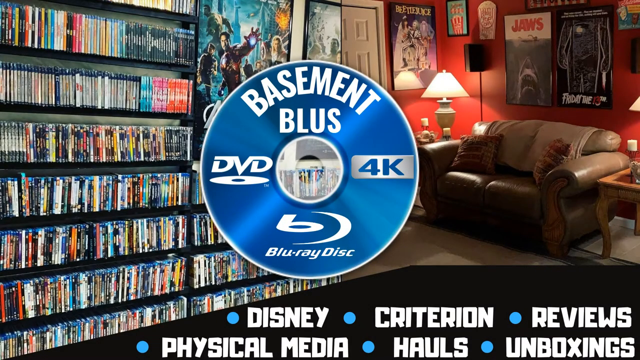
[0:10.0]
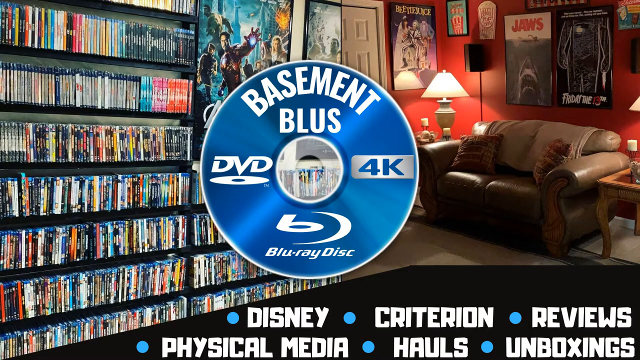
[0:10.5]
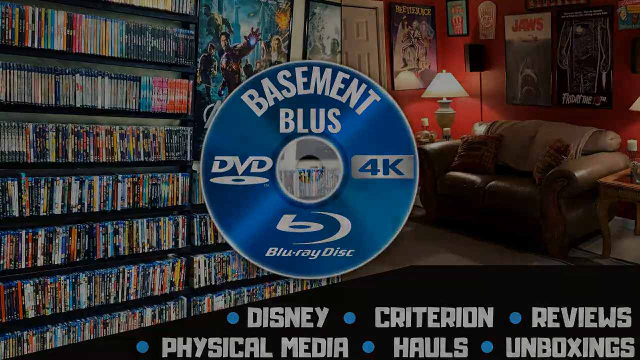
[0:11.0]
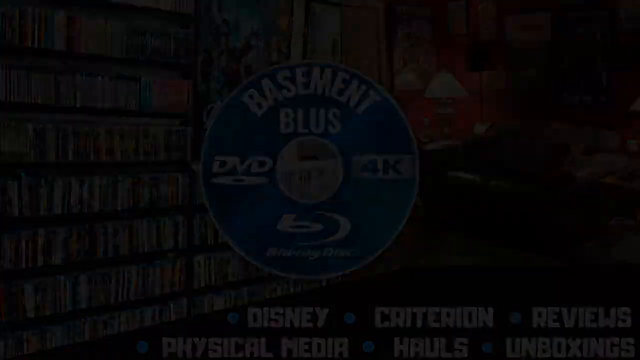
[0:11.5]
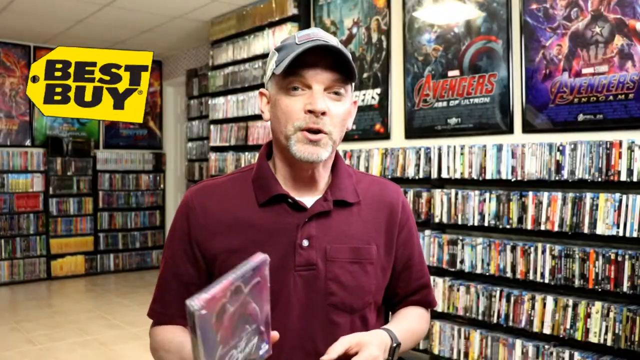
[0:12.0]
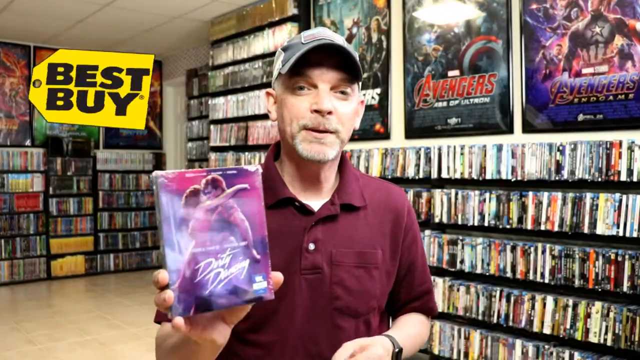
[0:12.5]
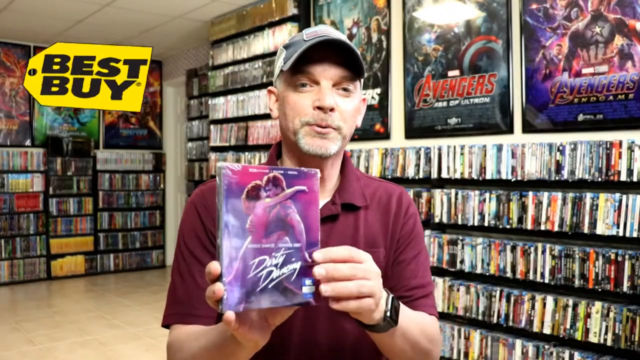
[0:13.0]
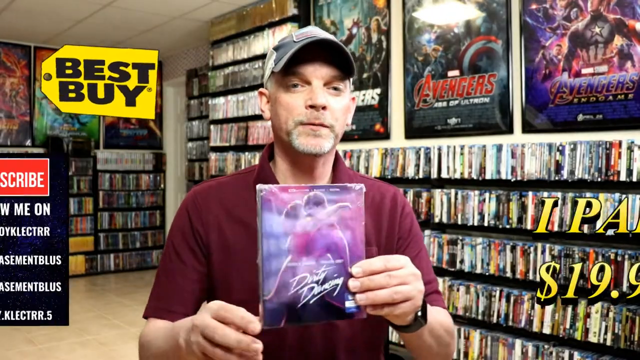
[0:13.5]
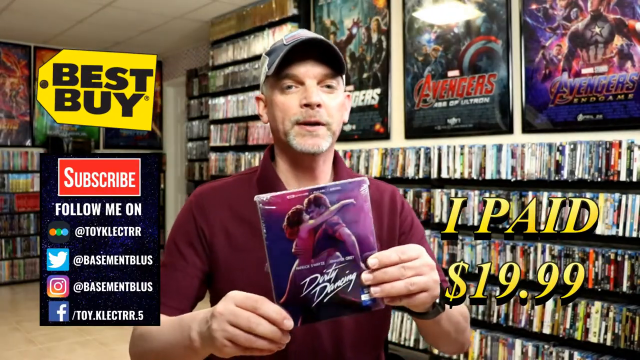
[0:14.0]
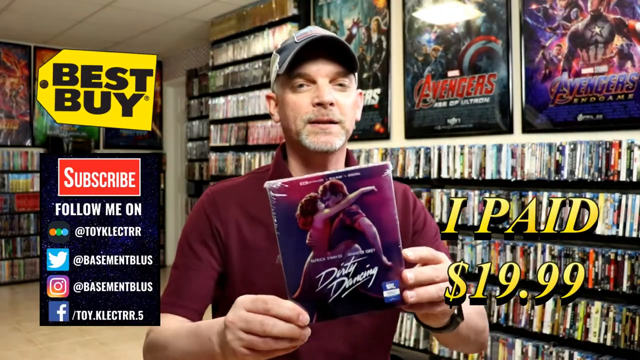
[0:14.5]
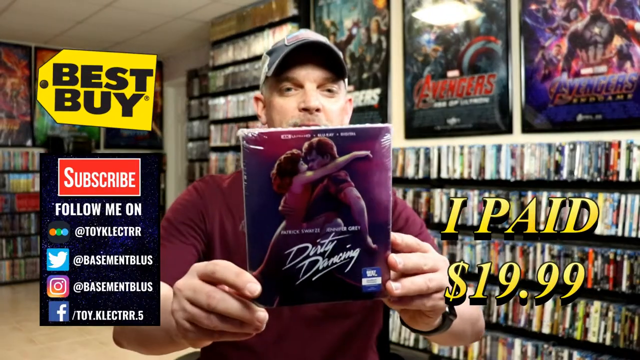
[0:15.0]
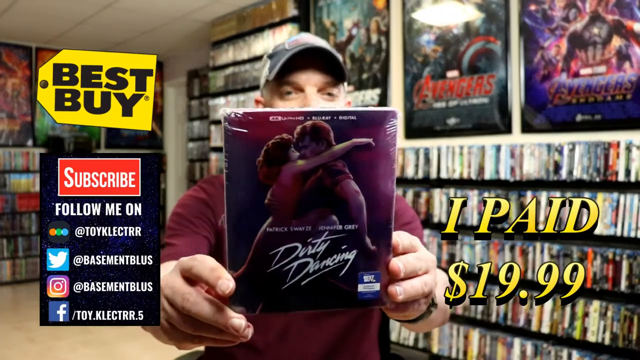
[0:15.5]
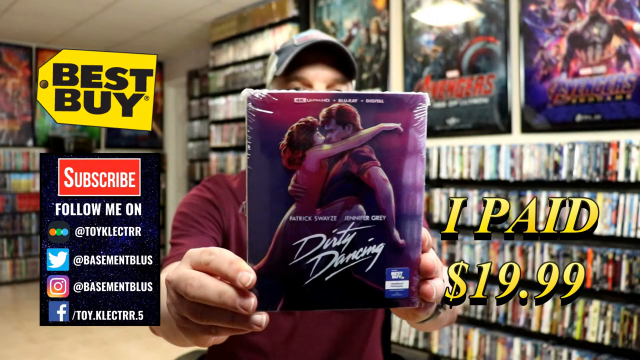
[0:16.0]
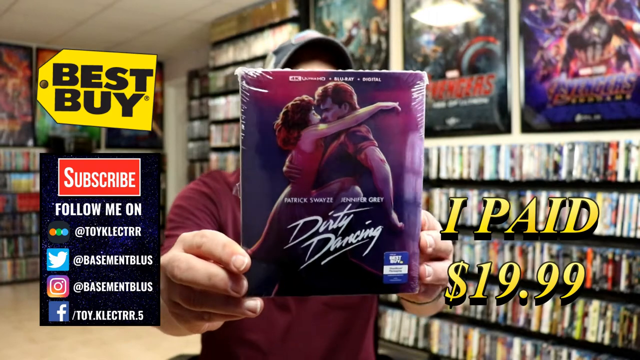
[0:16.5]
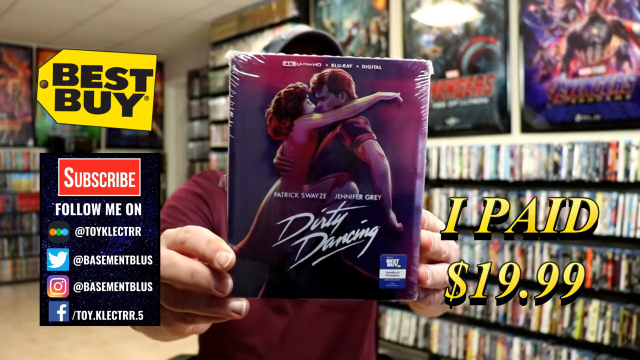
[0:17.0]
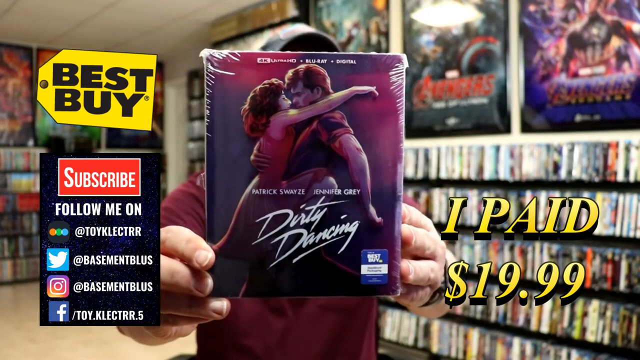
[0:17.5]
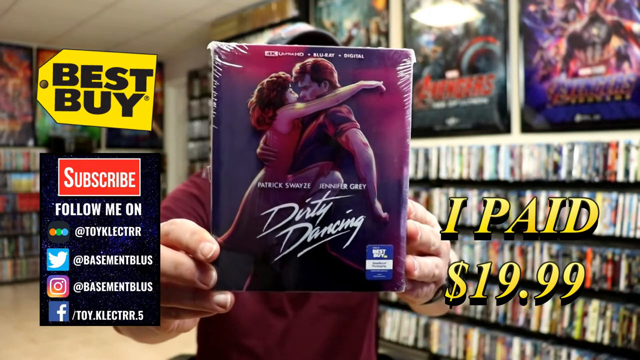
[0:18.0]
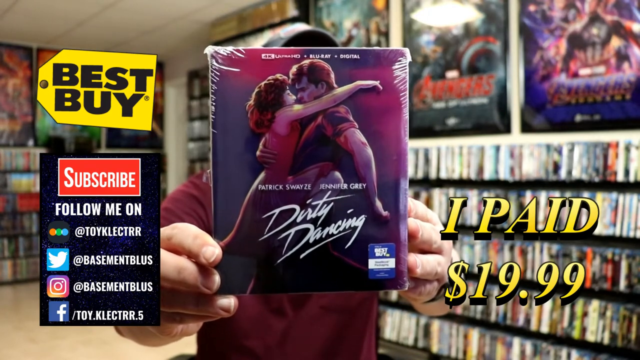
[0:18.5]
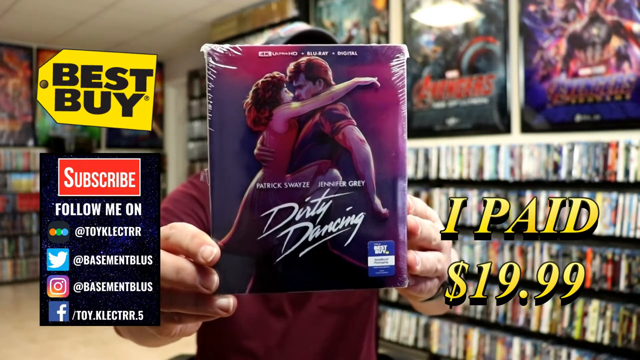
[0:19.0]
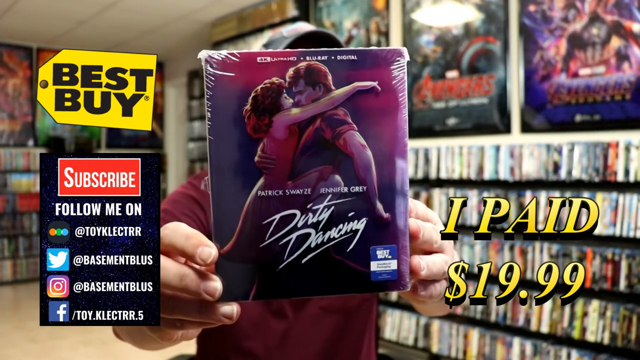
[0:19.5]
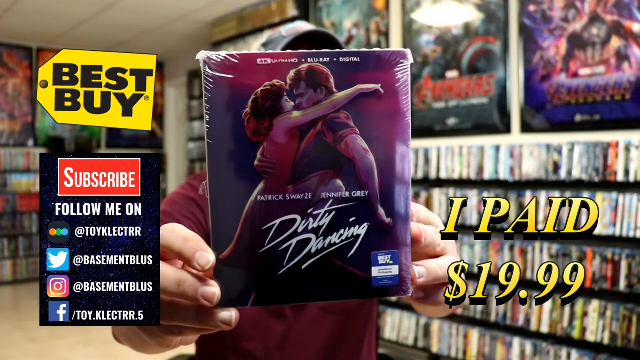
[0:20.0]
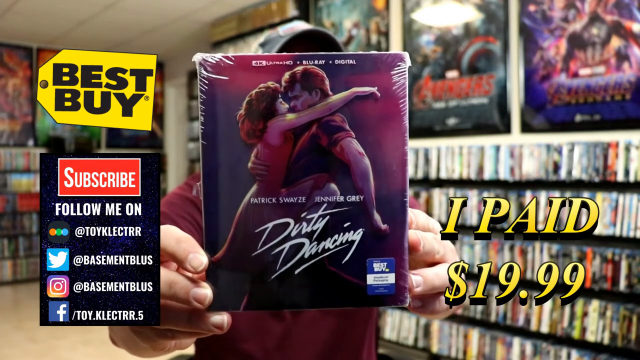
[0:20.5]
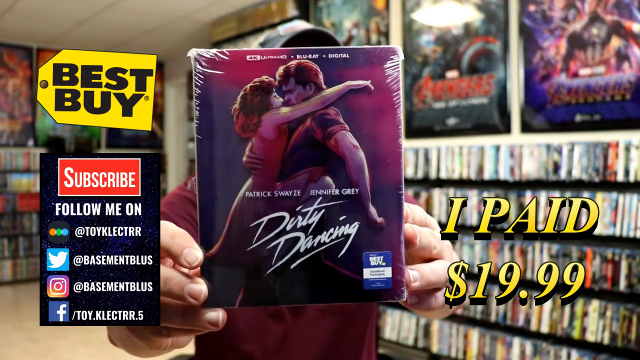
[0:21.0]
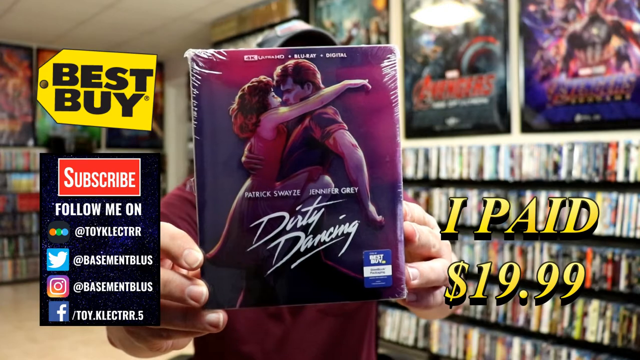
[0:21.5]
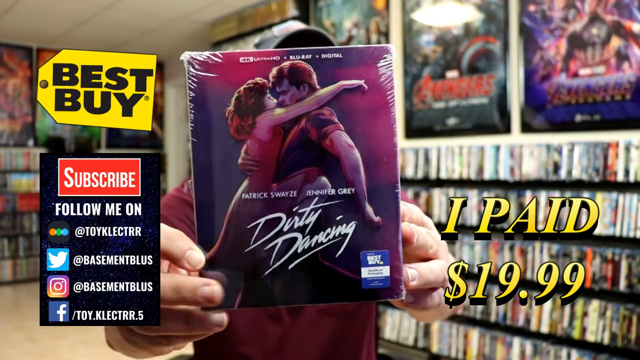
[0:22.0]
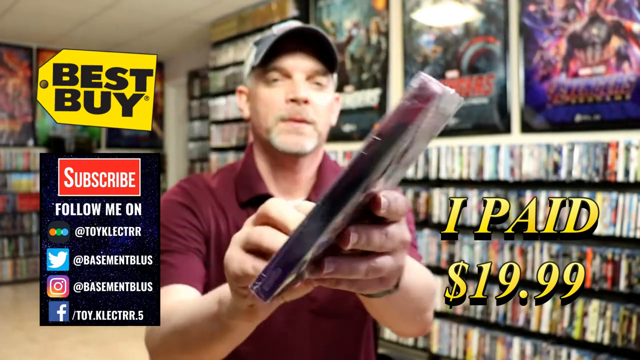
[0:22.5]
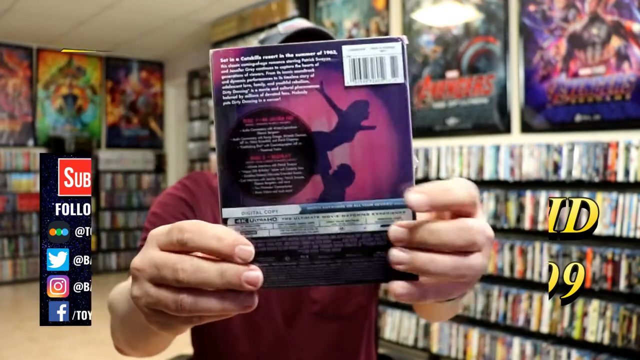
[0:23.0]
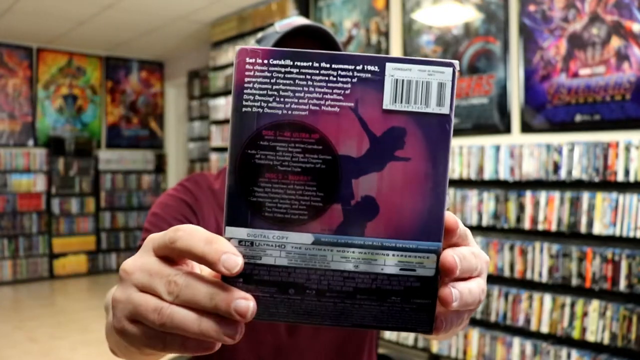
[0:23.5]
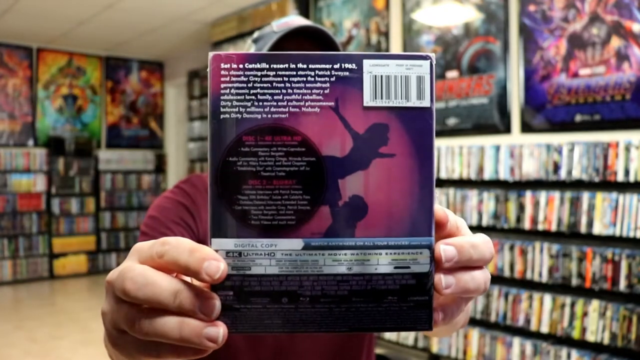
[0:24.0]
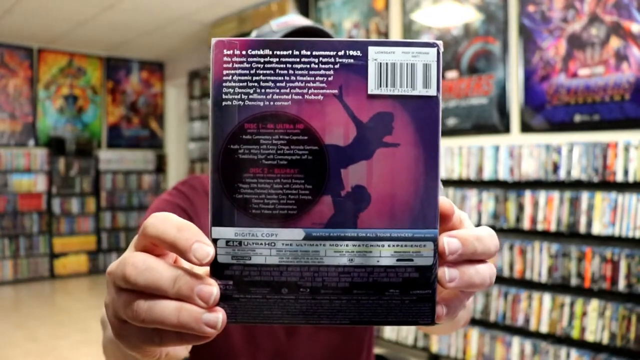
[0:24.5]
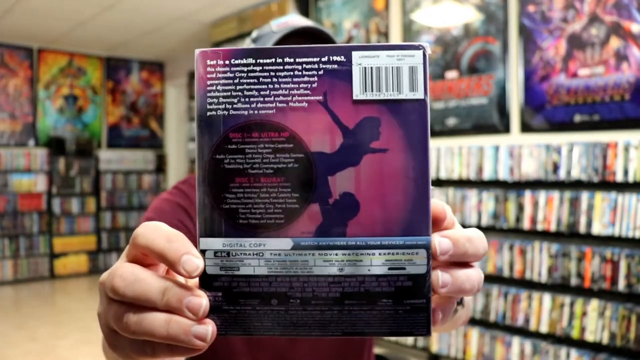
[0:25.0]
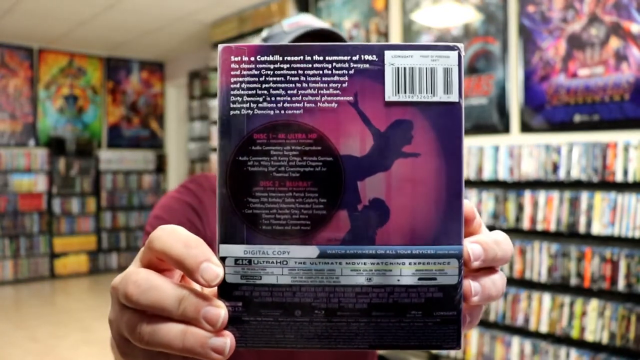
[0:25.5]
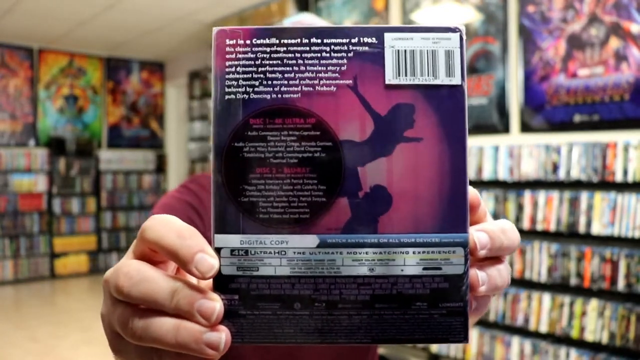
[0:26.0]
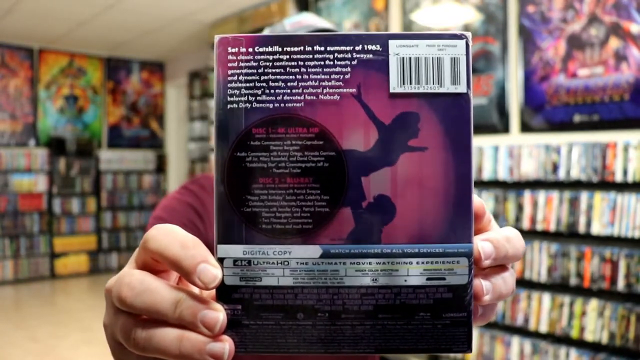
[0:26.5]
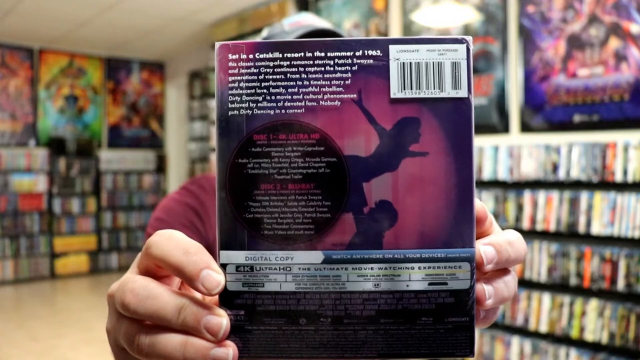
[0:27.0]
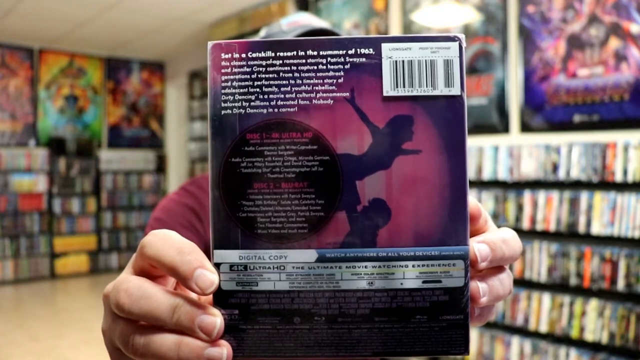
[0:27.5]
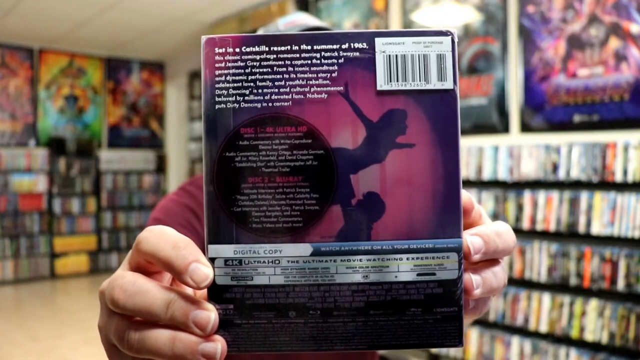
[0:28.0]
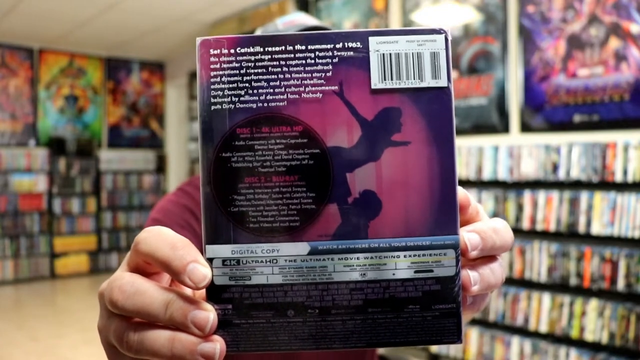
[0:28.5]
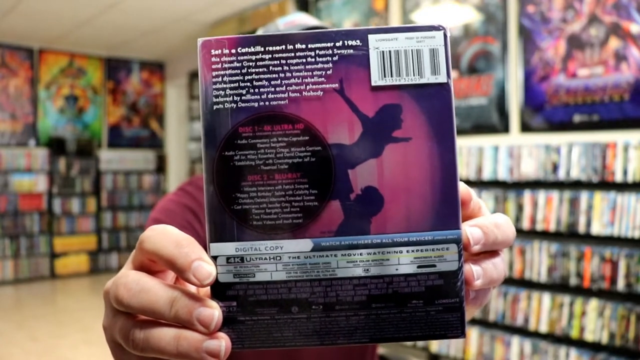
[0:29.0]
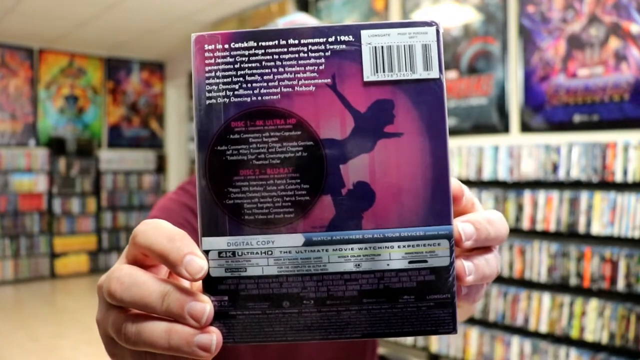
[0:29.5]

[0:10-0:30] A logo pops up as an introduction for the video, reading "basement blues", apparently the name of this film discussion series. A pop-up style intro shows the man's social media accounts on various websites such as Twitter, Instagram, Facebook and one other site, with a color scheme of orange, green and blue and three dots. On the right side of the screen, text reads "I paid $19.99", describing how much he paid for the movie. He then holds the movie with both hands, the physical case sealed in shrink wrap, and rotates the cover so it comes into the camera's view as the focus of the framing.